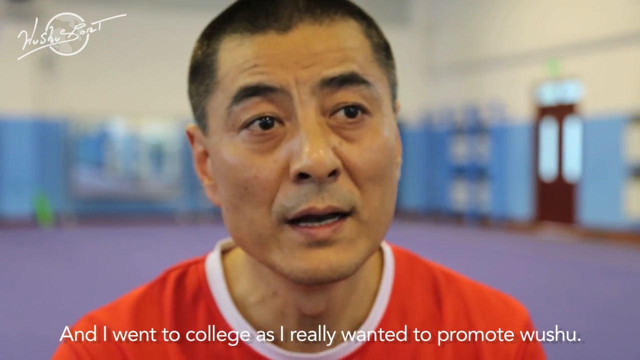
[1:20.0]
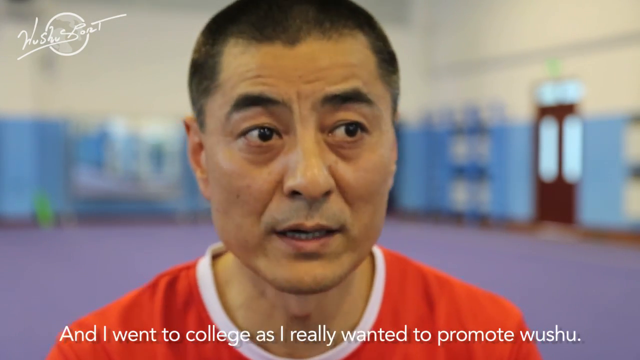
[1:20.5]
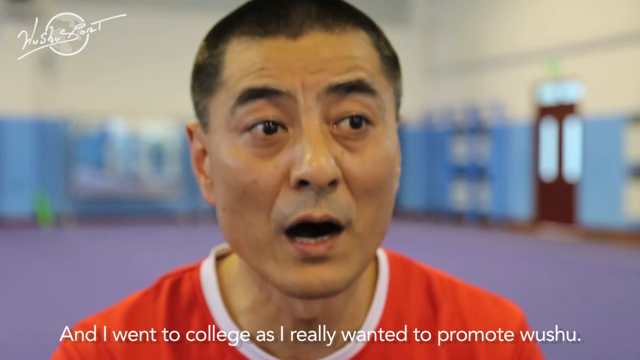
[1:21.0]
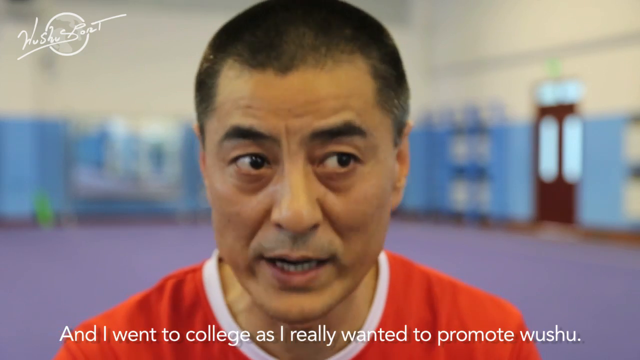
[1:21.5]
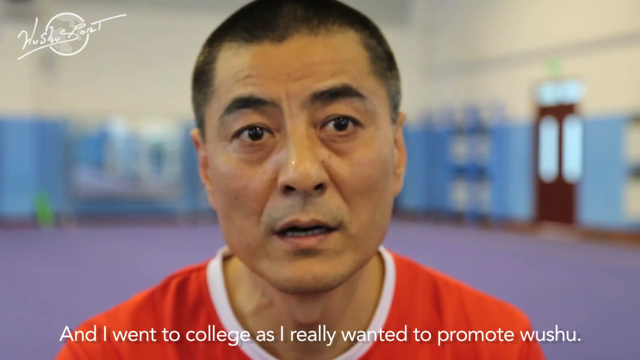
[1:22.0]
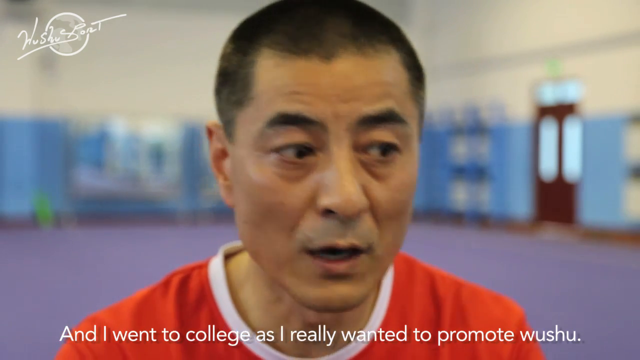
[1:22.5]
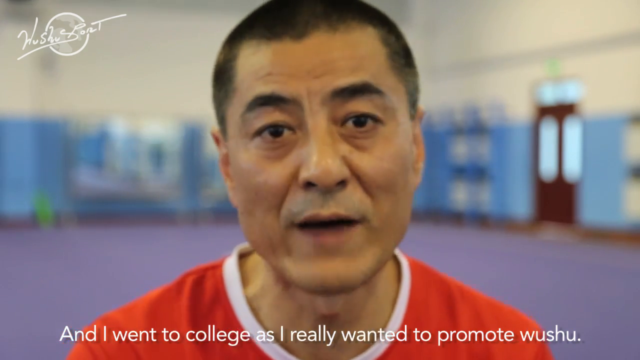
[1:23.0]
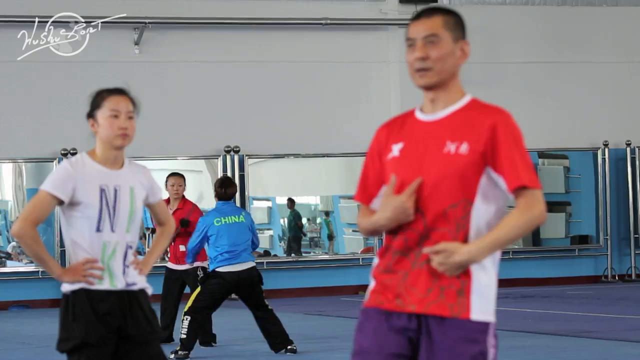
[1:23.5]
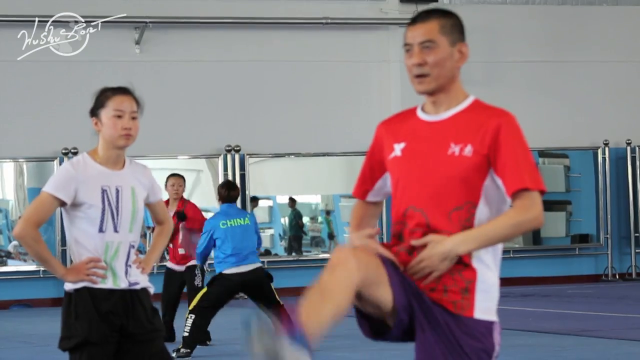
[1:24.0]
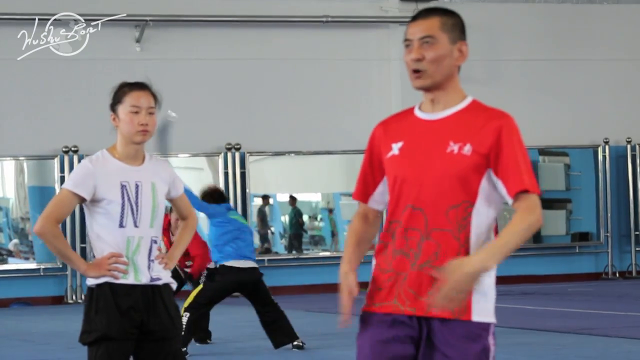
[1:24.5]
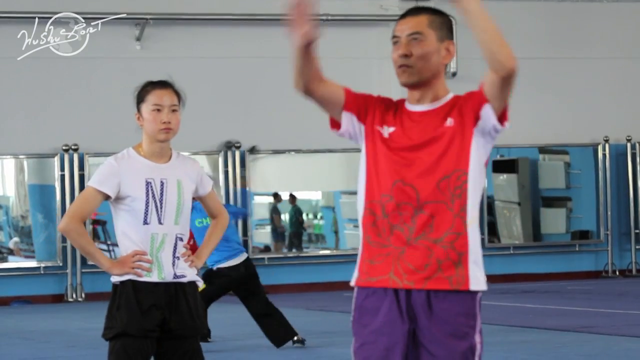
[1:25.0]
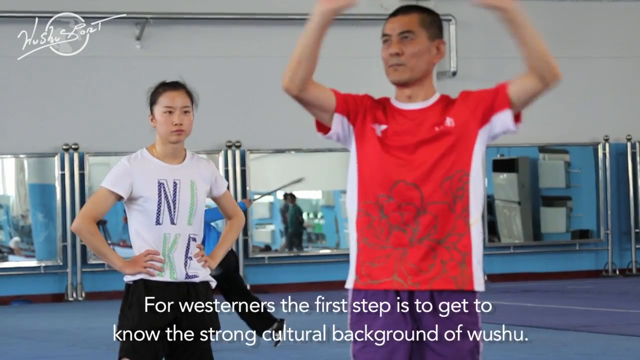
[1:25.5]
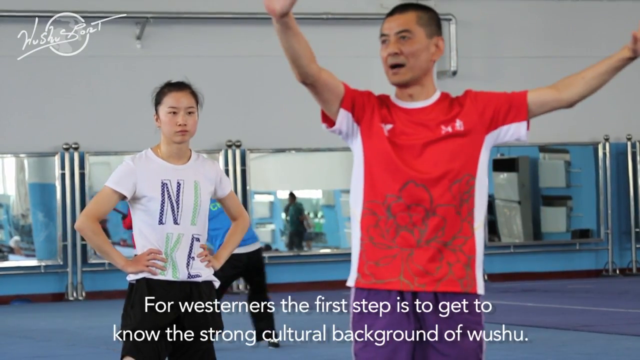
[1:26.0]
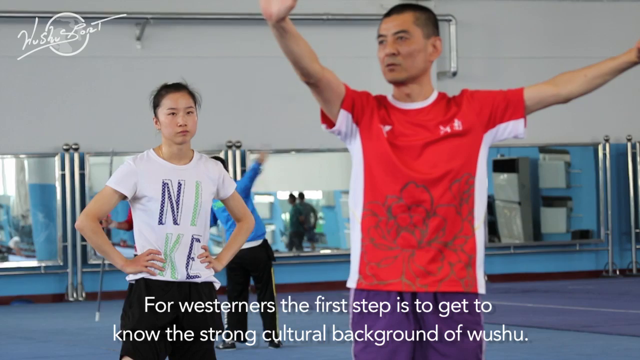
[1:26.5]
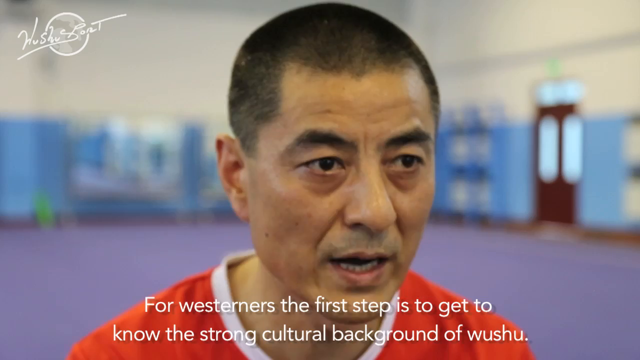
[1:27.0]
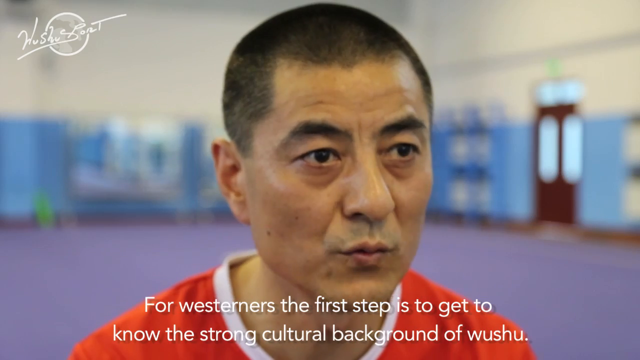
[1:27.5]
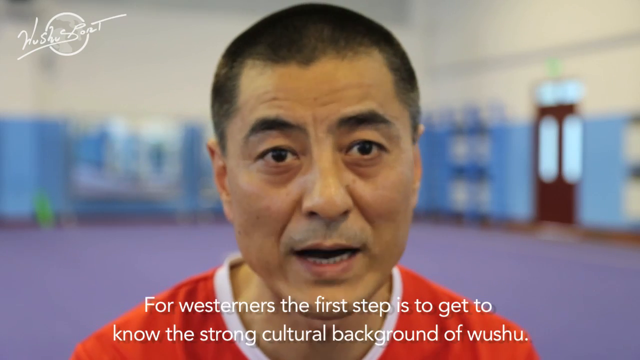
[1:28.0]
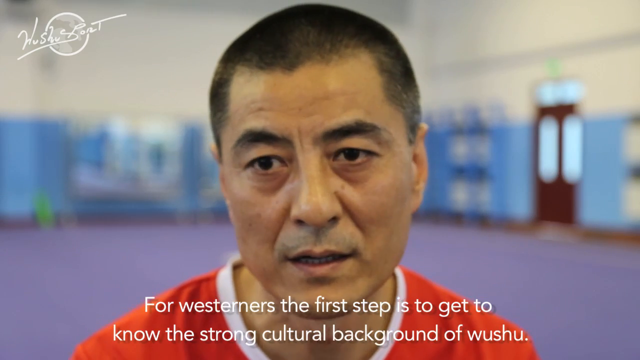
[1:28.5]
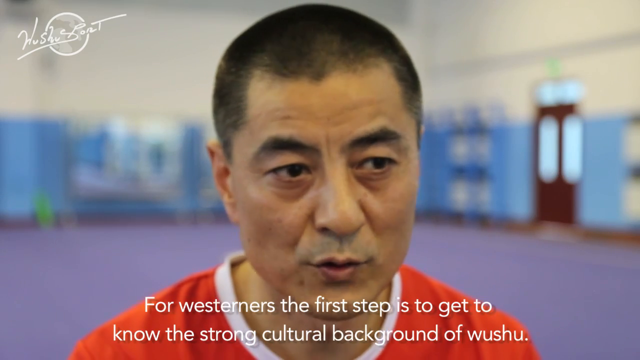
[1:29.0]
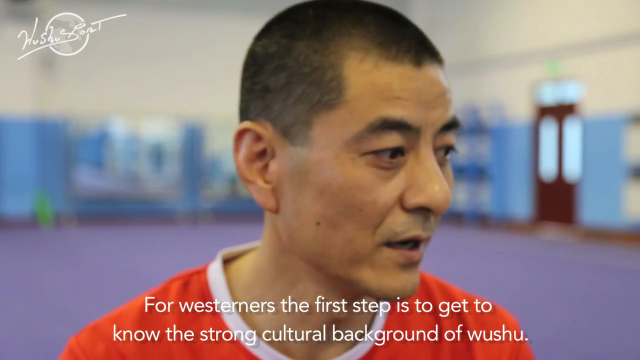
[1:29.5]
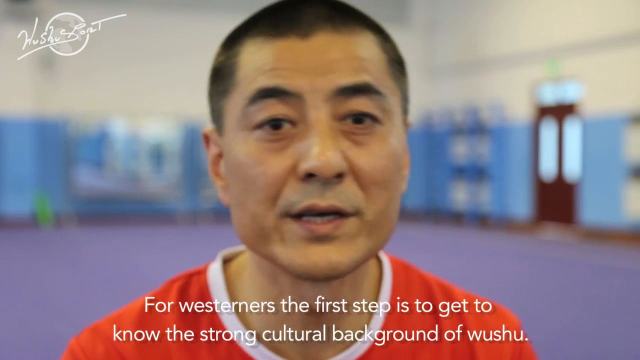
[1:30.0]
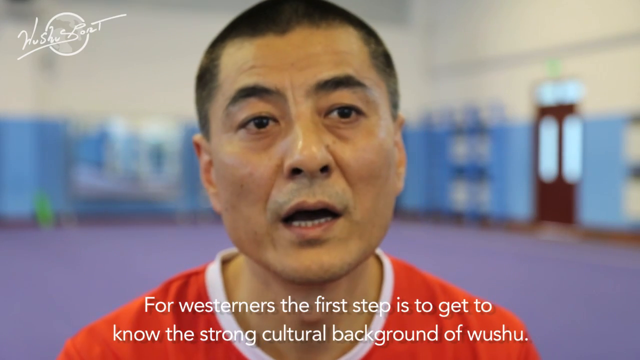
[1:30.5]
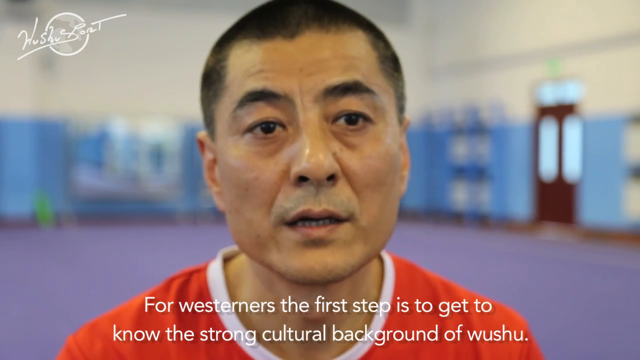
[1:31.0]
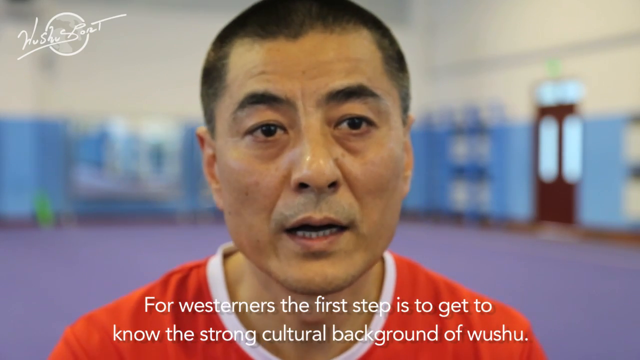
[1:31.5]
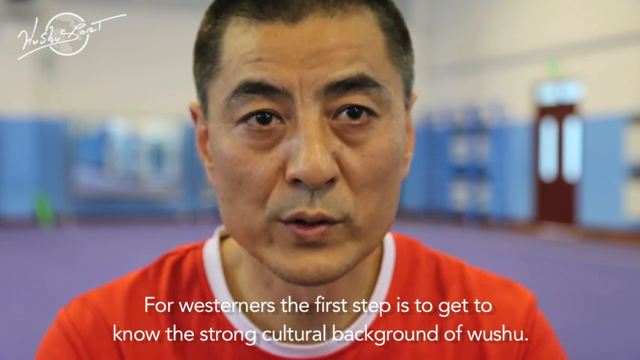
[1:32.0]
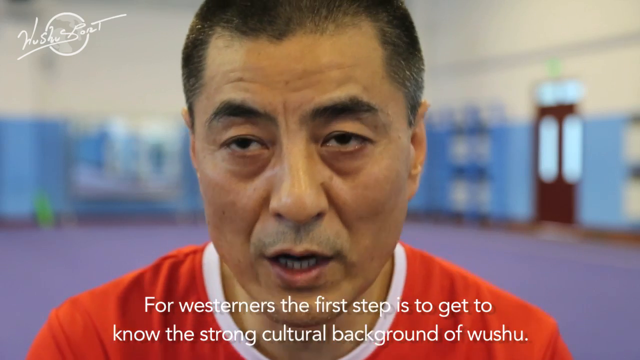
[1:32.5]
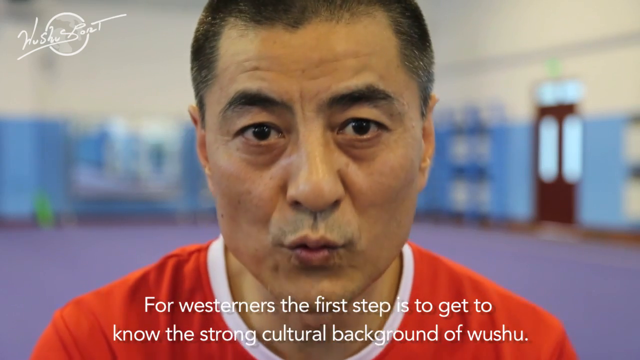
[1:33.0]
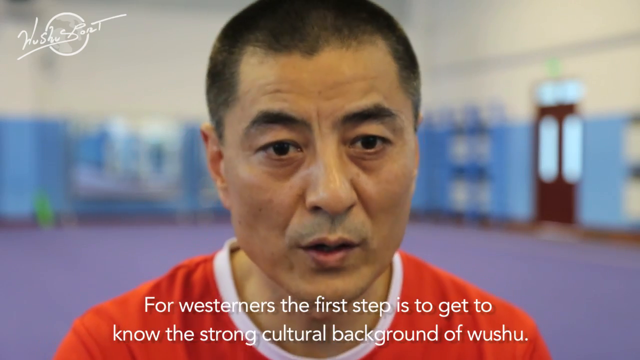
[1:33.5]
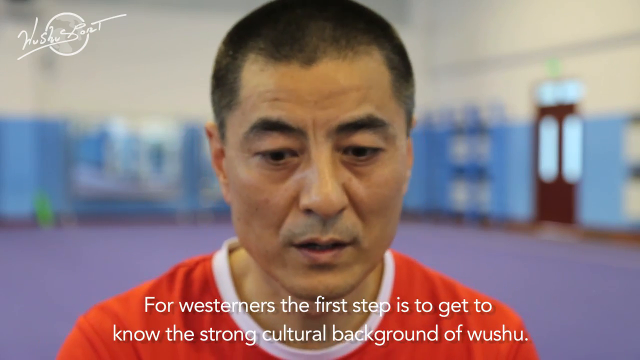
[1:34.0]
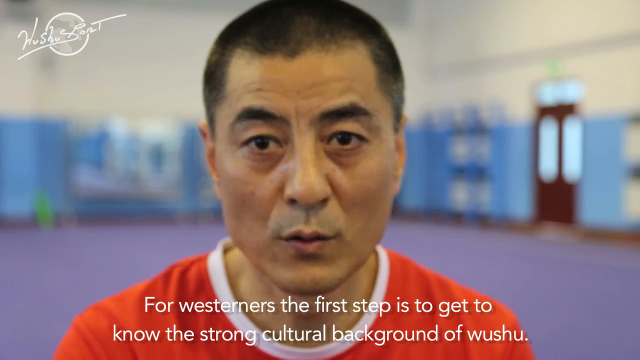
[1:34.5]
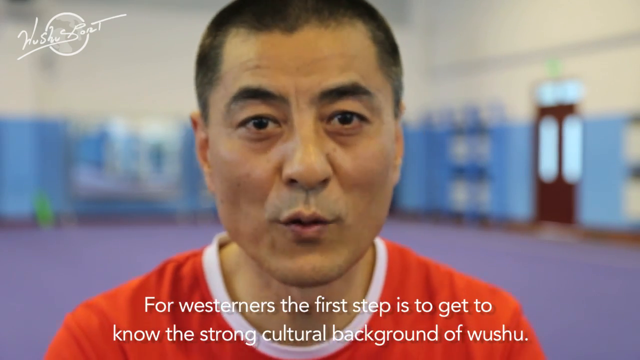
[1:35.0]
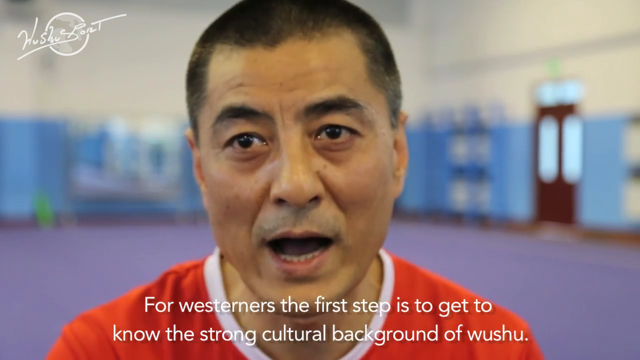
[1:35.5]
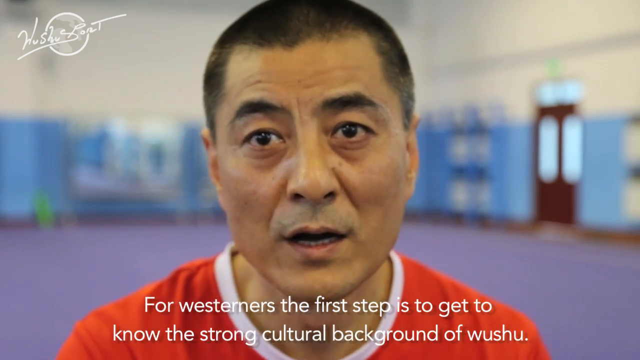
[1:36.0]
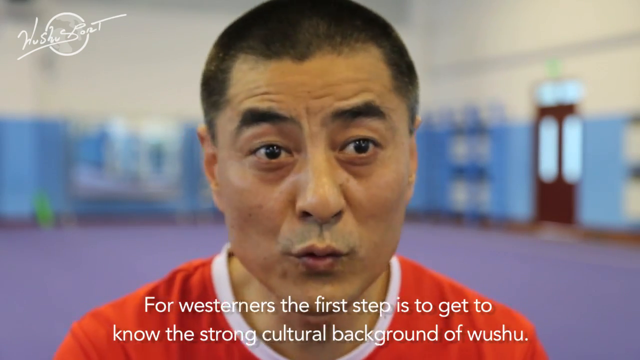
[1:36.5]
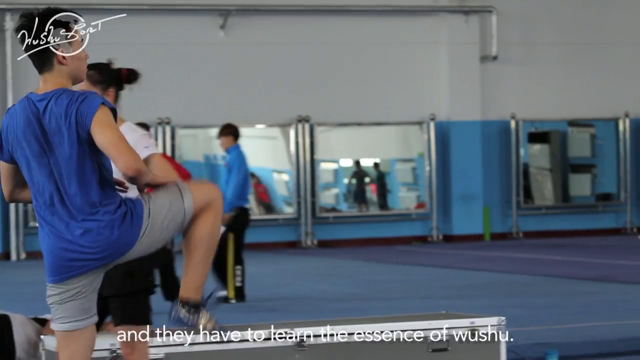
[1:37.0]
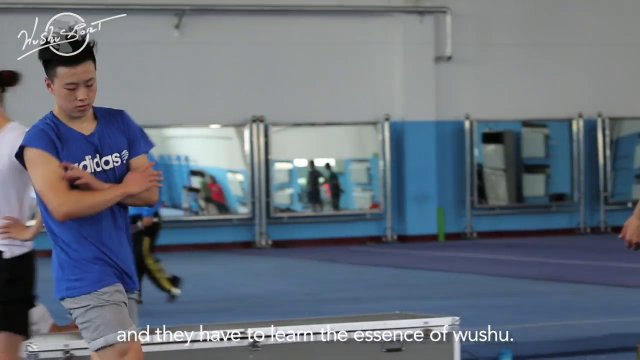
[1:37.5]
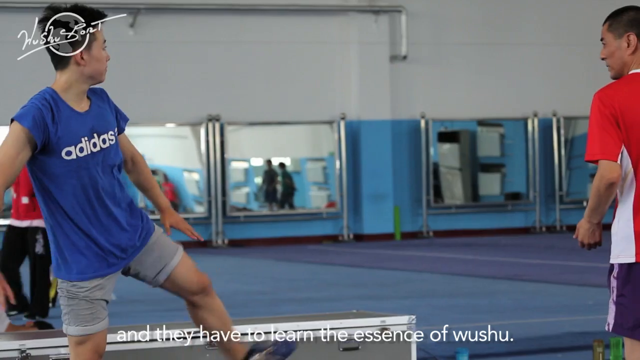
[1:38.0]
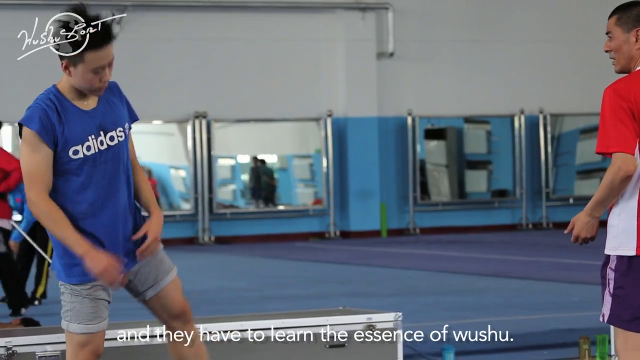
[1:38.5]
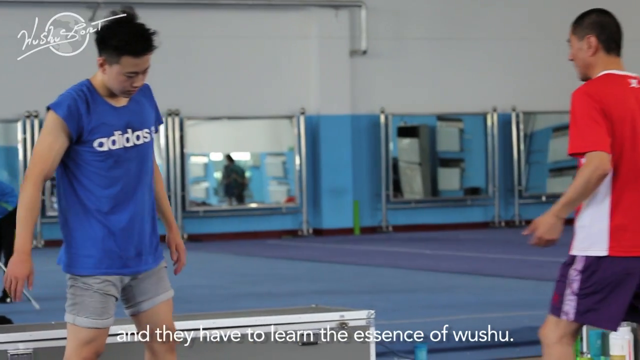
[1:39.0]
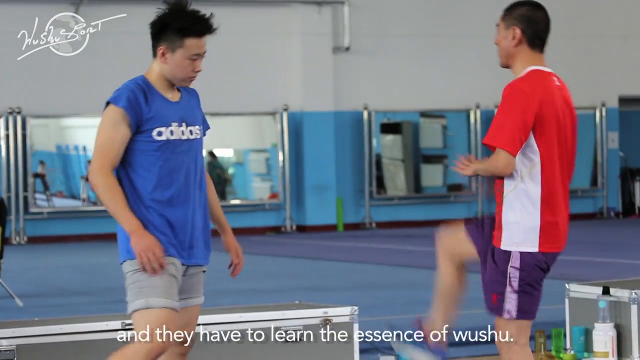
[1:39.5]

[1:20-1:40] In a very large room with walls white on the top half and blue on the bottom half, and a floor entirely covered with blue or purple mats put together, a Chinese man with black hair in a red shirt speaks to the camera, seen from the shoulders up. Captions along the bottom read "and I went to college as I really wanted to promote Wushu." The video cuts to another scene of the man, seen from the waist up, wearing purple and black shorts and a red shirt with white stripes along the sides. Behind him, large mirrors set side by side make the whole wall basically one mirror. Standing to his right is a Chinese girl with black hair in a short-sleeved white shirt; at the top of the shirt are a purple "N" and "I", and underneath are a green "K" and a purple "E", spelling out Nike. She has her hands on her hips, listening and watching the man in front of her. Captions along the bottom read "for Westerners The first step is to get to know the strong cultural background of Wushu and they have to learn the essence of Wushu."